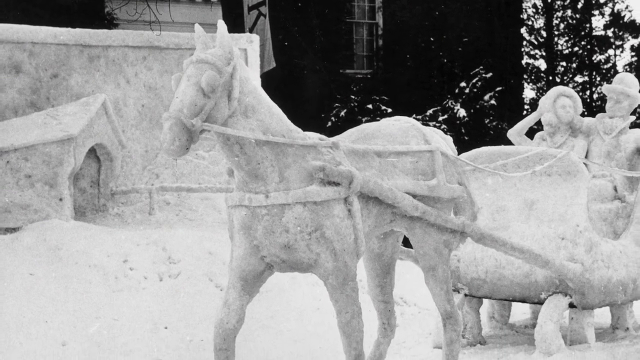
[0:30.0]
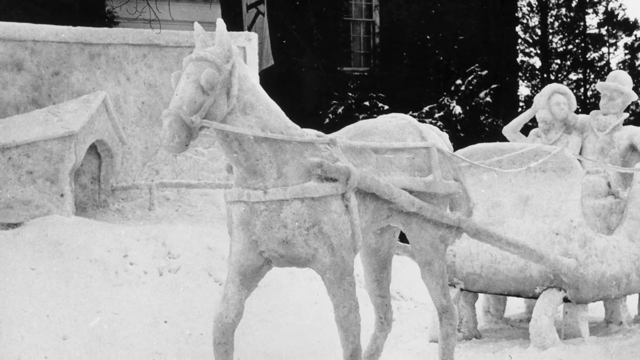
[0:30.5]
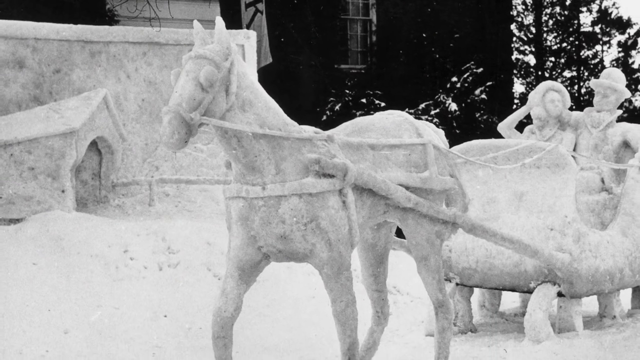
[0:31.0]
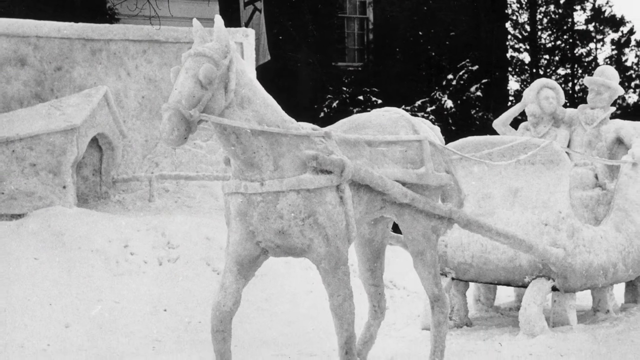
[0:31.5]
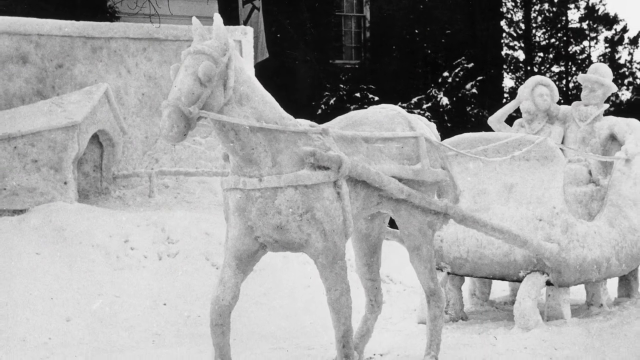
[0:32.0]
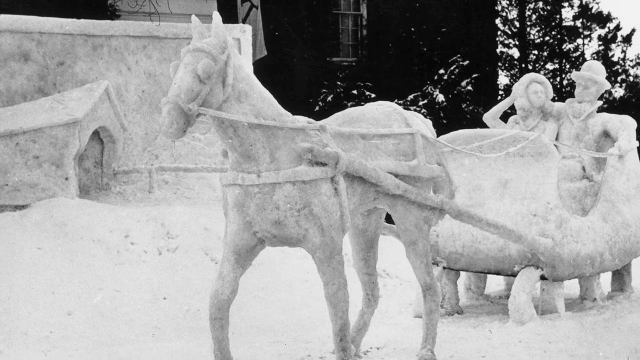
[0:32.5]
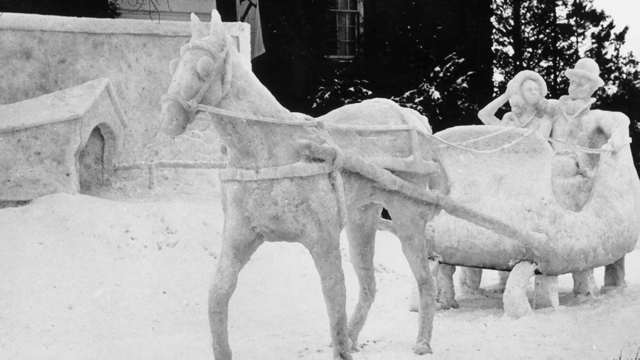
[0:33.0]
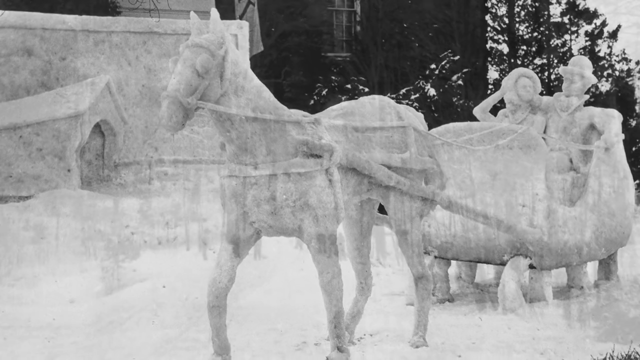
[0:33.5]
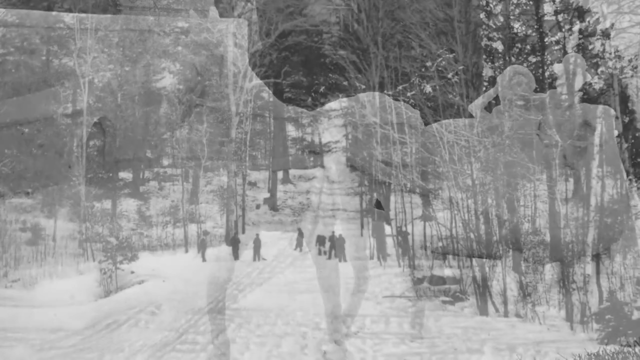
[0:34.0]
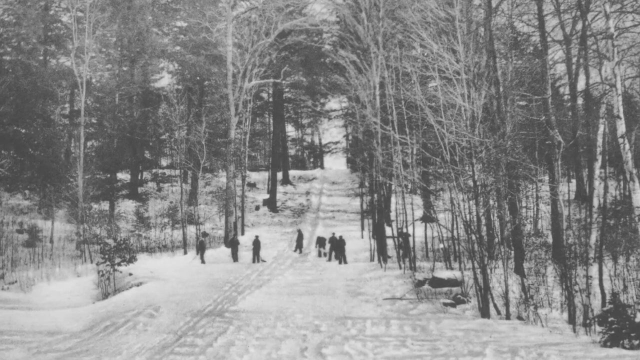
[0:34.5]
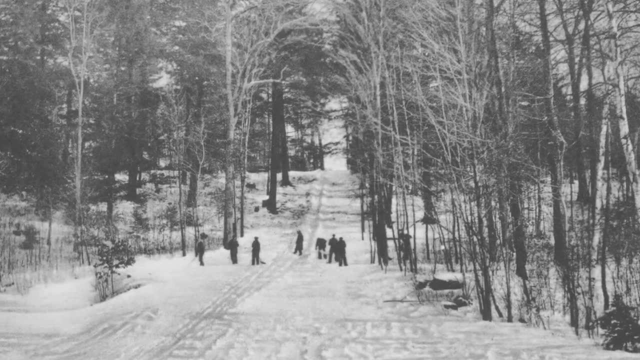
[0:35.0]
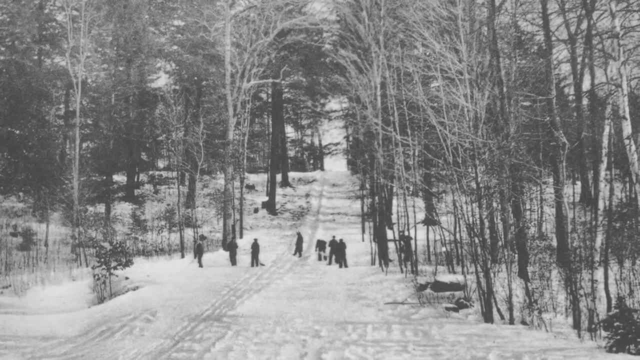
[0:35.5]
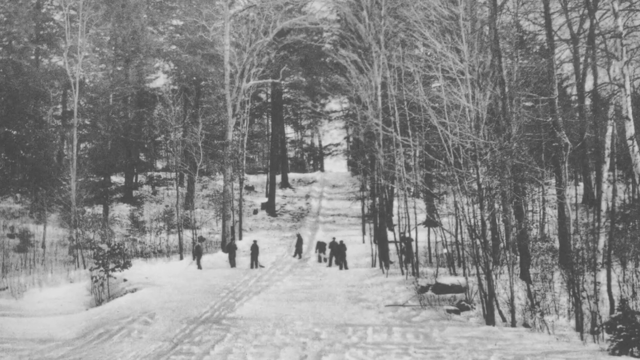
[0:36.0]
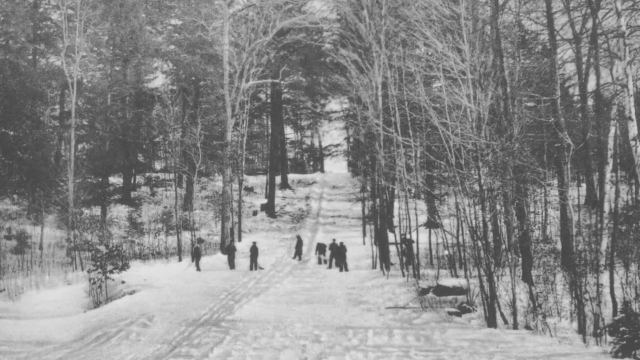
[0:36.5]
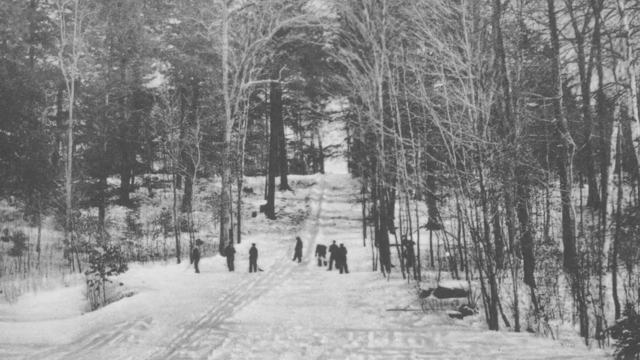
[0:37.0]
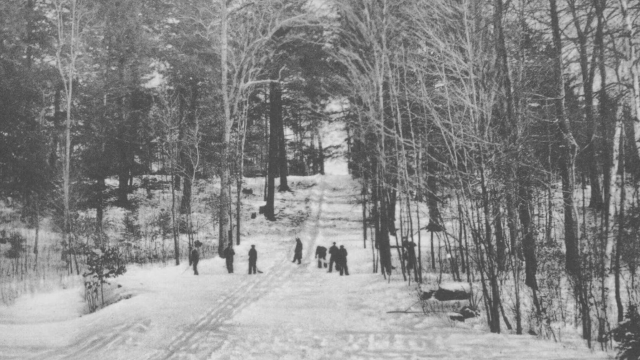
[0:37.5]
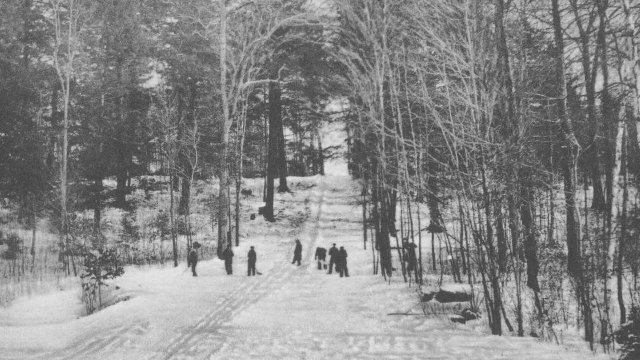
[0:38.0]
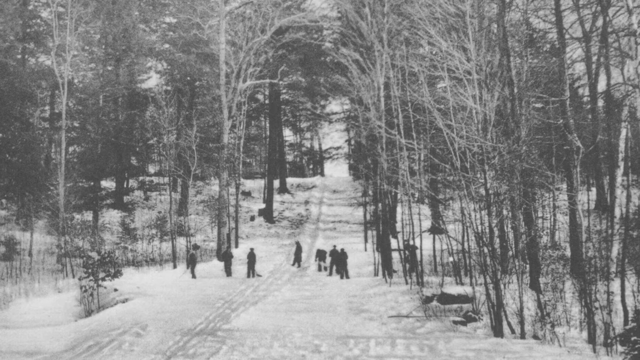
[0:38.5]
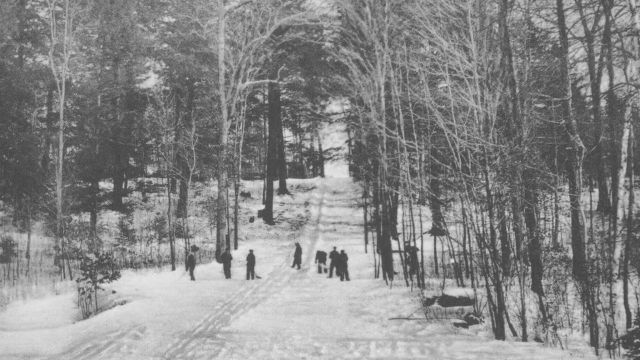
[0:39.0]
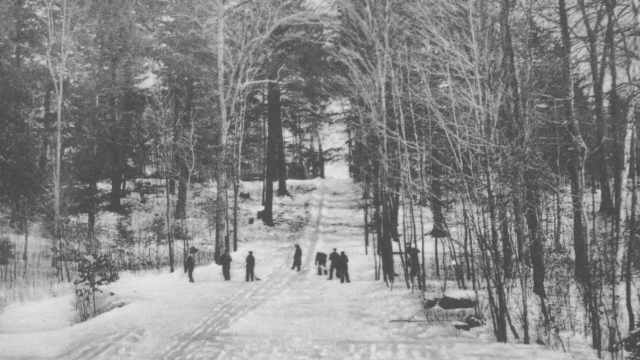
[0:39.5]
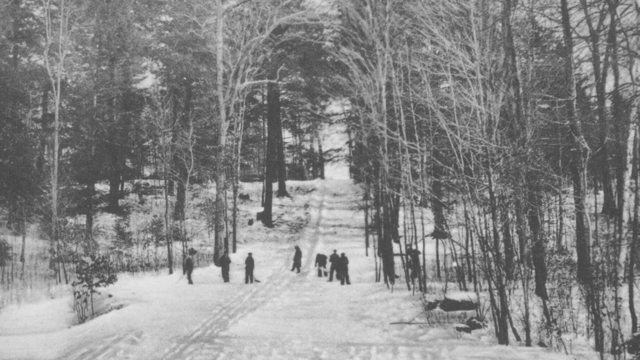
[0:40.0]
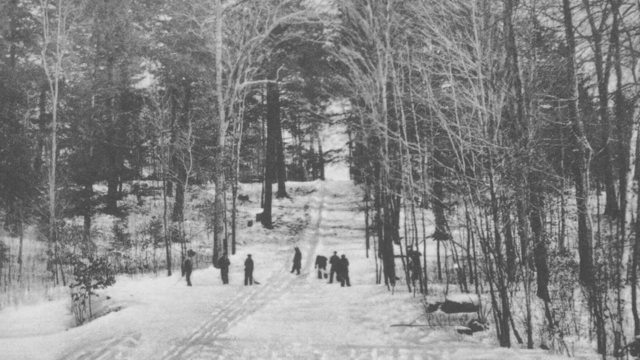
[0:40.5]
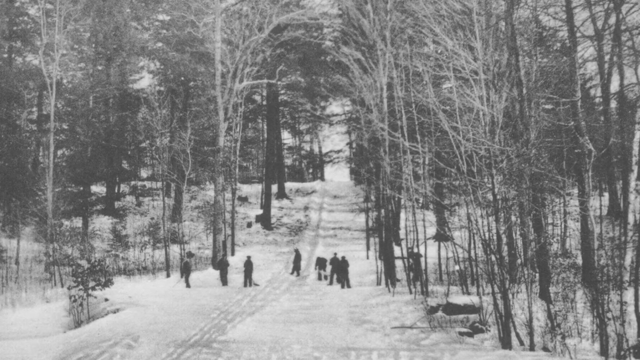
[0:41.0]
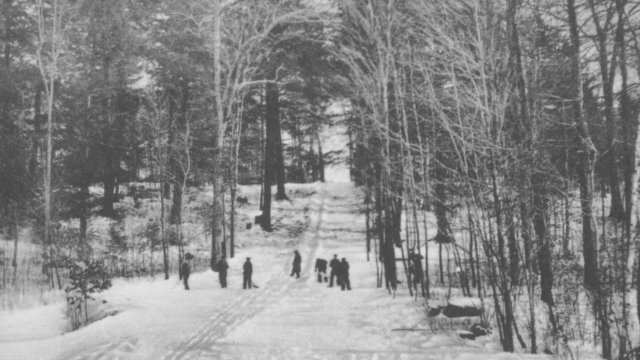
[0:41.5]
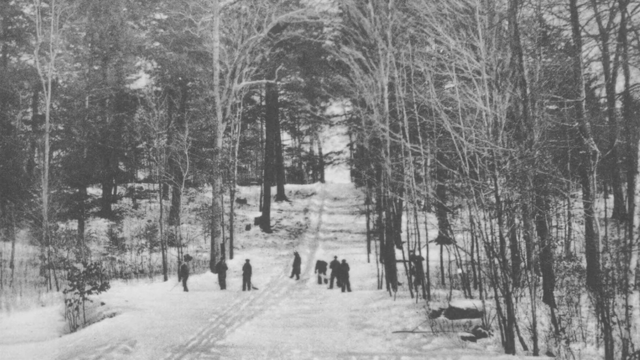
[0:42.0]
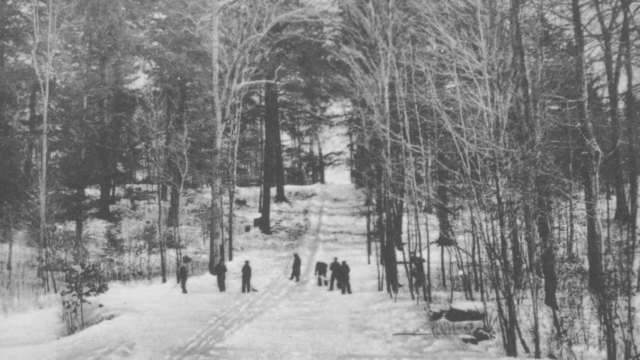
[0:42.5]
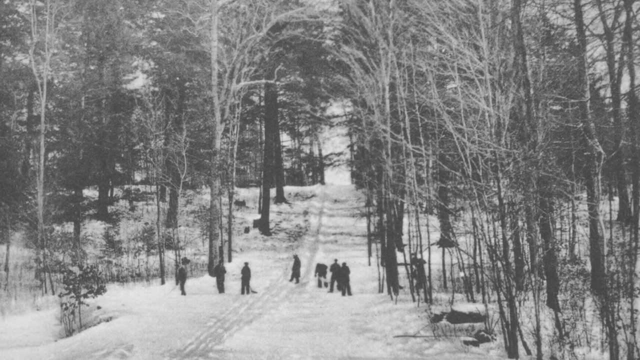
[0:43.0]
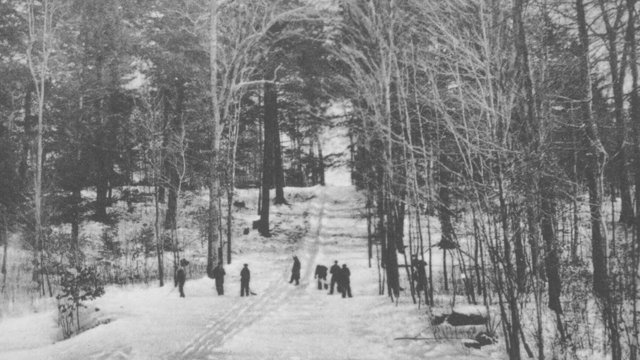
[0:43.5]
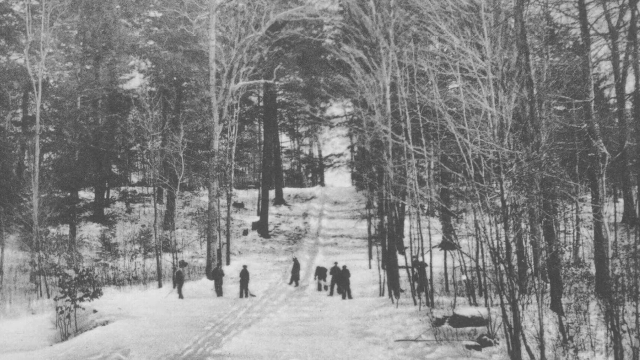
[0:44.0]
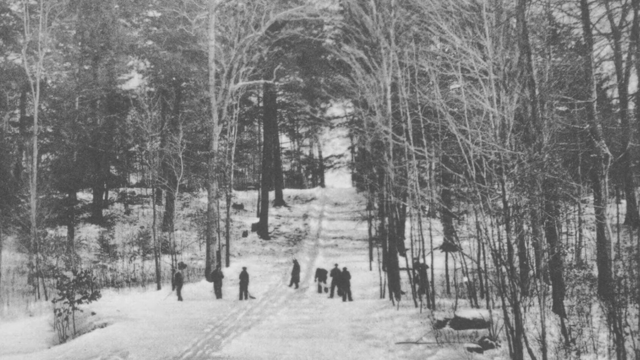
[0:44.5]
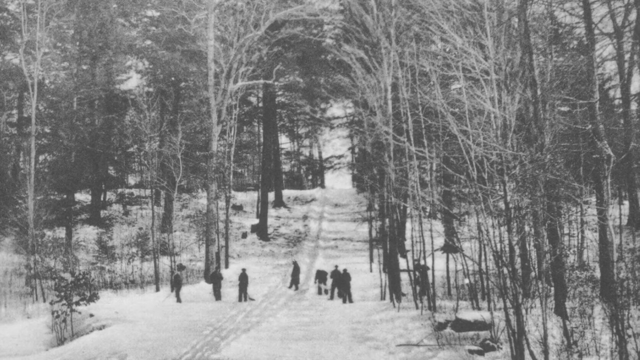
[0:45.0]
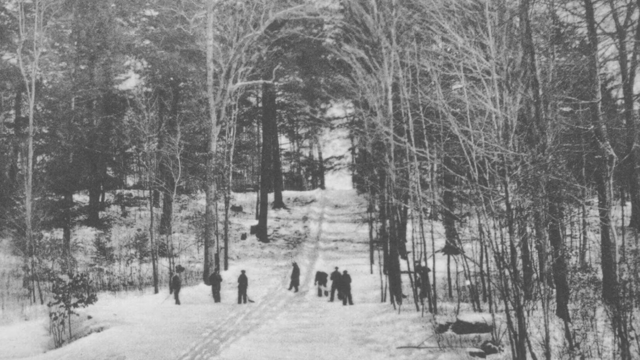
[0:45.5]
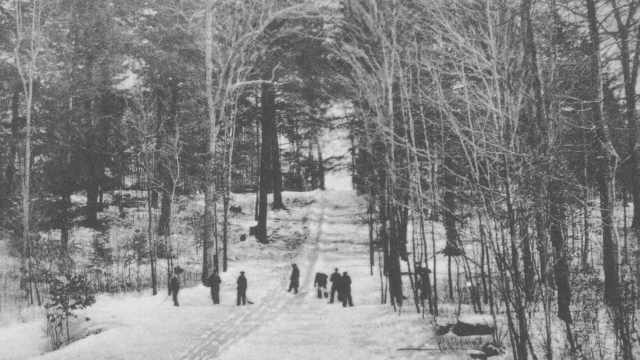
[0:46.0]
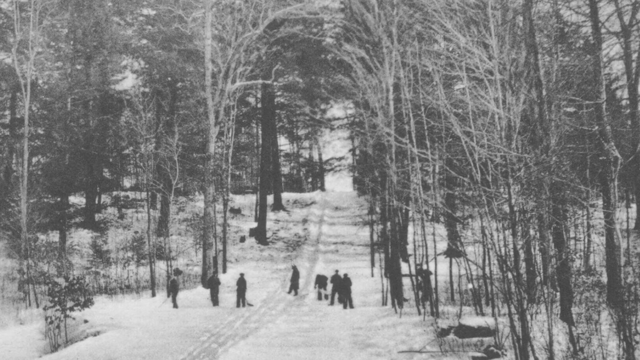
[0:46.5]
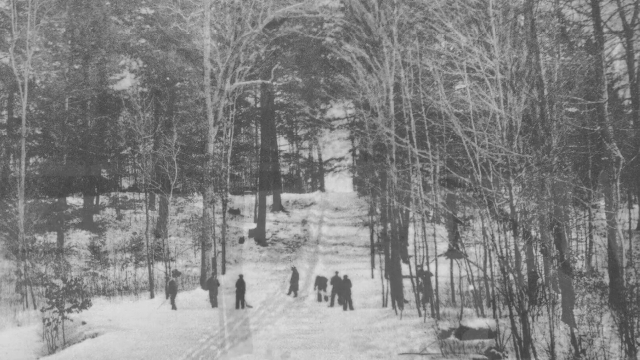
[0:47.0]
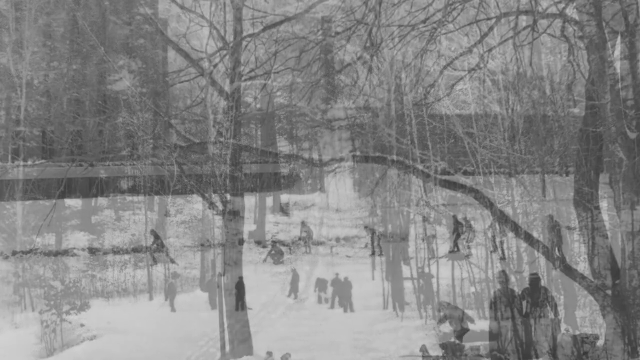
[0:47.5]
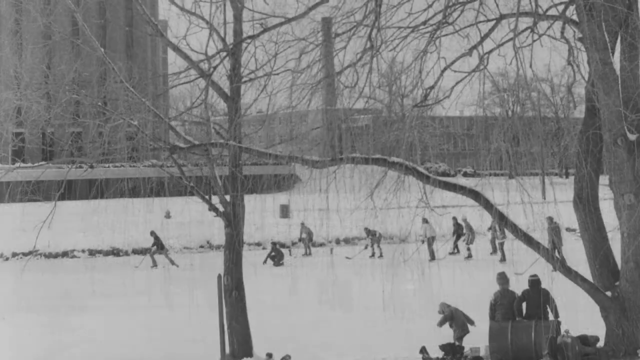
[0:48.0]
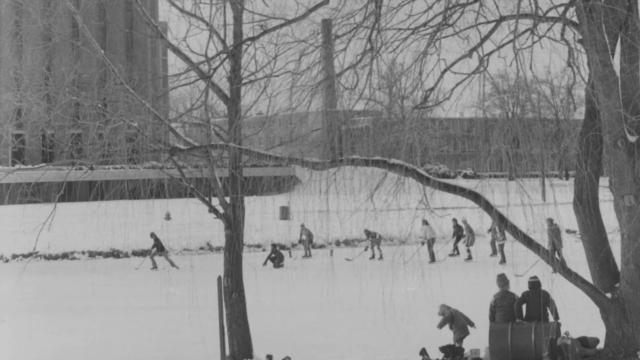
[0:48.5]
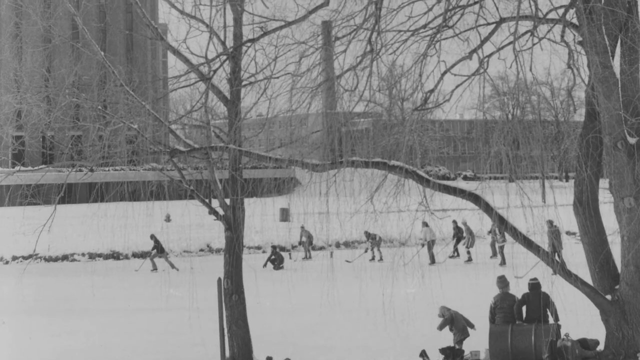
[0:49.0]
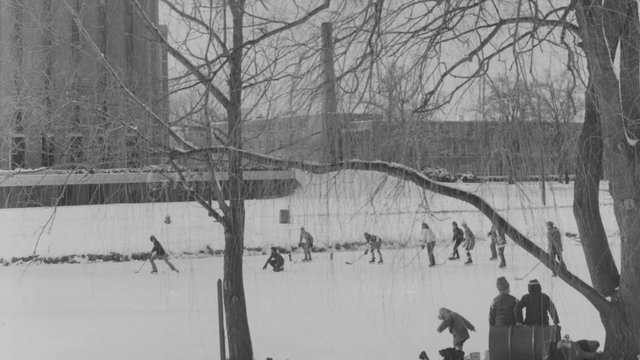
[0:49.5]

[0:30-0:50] What looks like an ice sculpture of horses and two people in a carriage appears, seemingly a photo; the view zooms in and then zooms out. Next, people appear: a group of possibly kids, one of whom seems to have a snow shovel. The setting looks barren, with what seems to be a hill and a lot of tall, thin trees. The photo looks a bit grainy and could be from the 1960s or older. There is a bit of zooming in on the roads. Then a quick shot shows people on skates, possibly playing hockey, with hockey pucks visible. The trees are very barren and it looks like deep winter.